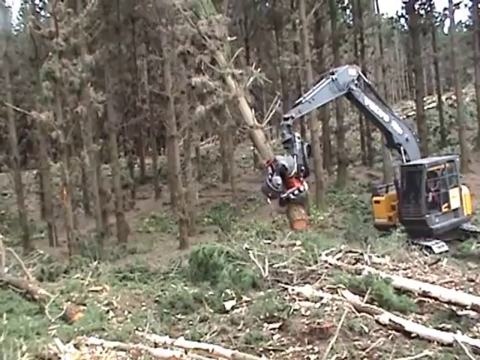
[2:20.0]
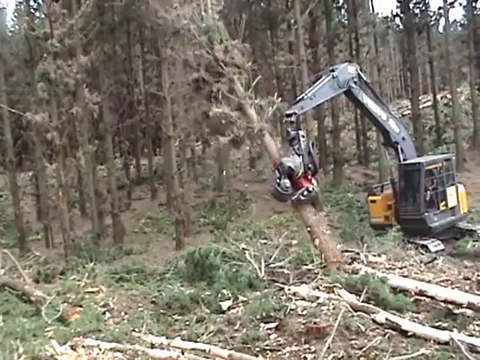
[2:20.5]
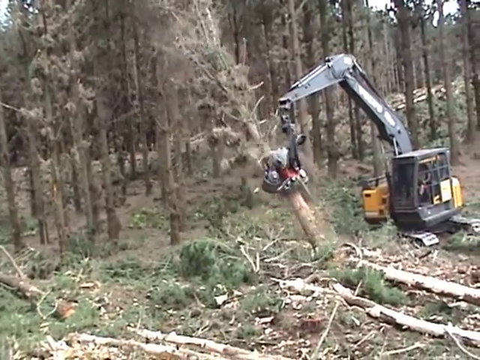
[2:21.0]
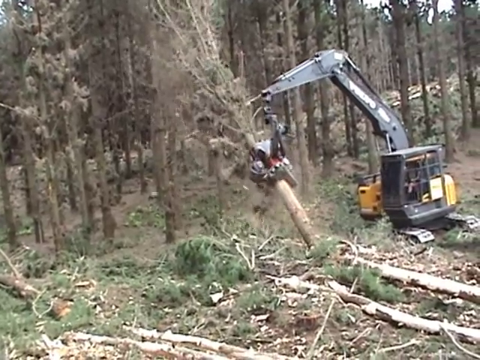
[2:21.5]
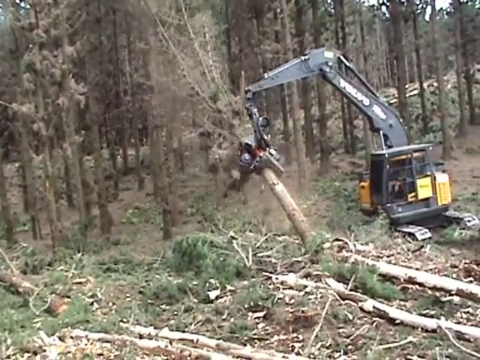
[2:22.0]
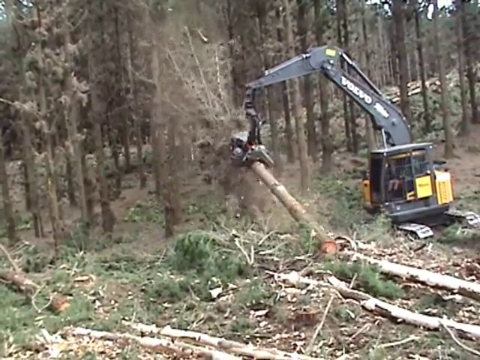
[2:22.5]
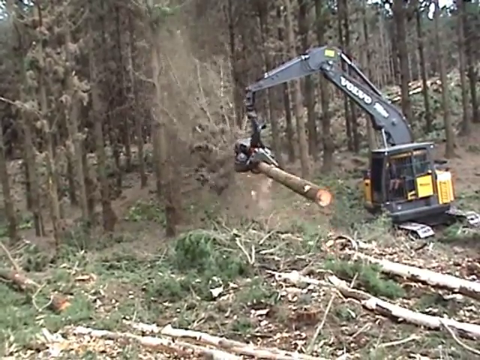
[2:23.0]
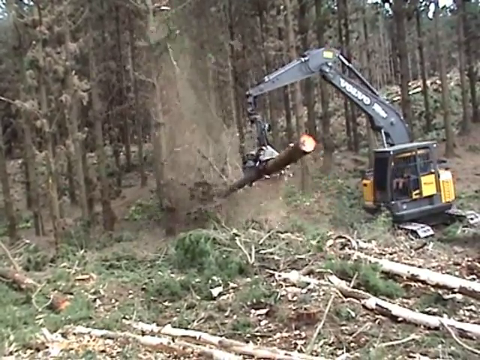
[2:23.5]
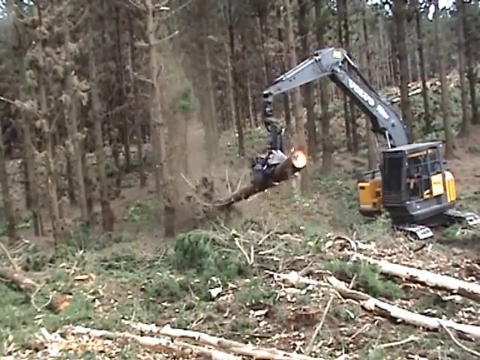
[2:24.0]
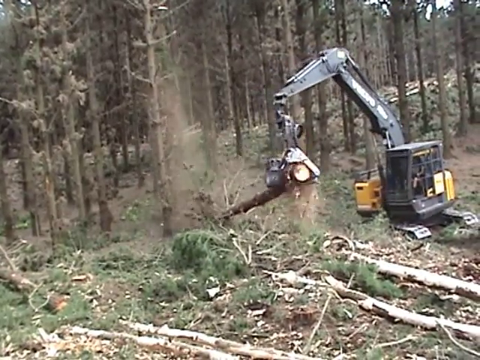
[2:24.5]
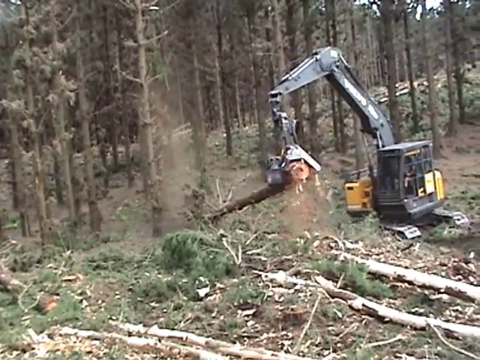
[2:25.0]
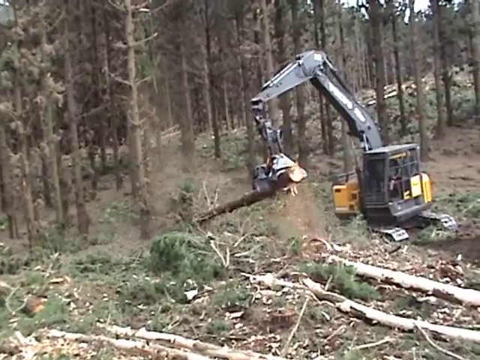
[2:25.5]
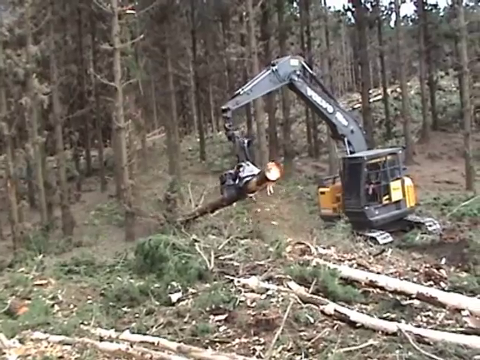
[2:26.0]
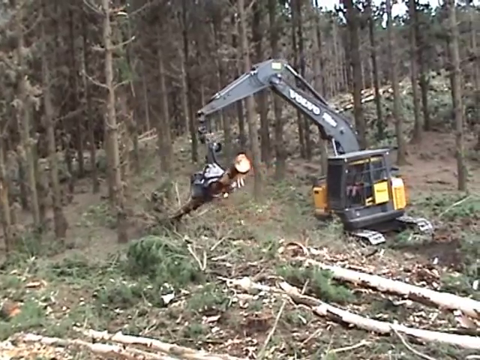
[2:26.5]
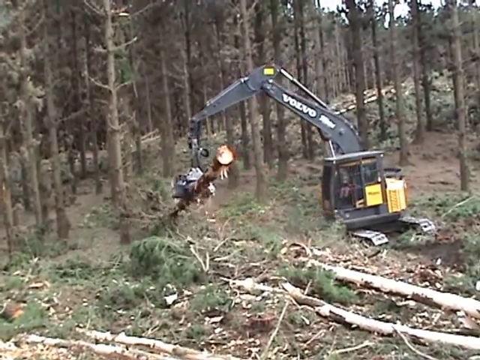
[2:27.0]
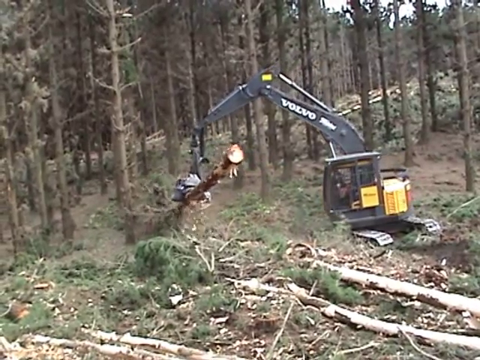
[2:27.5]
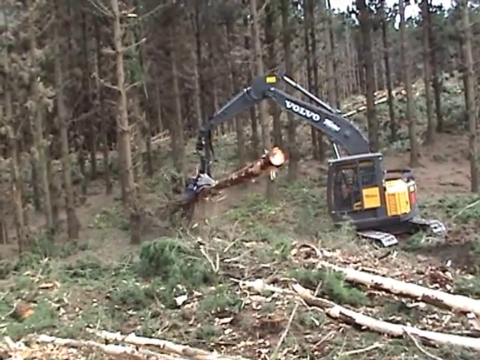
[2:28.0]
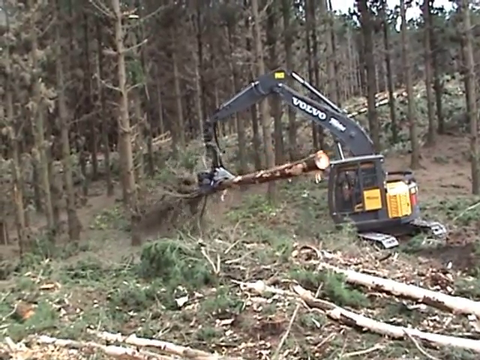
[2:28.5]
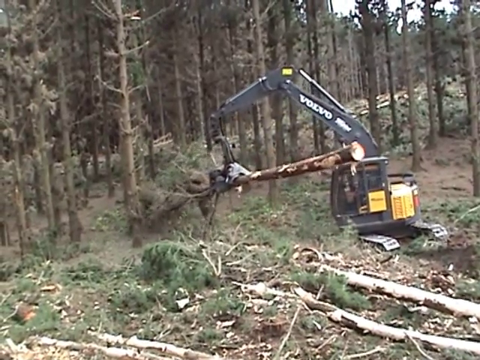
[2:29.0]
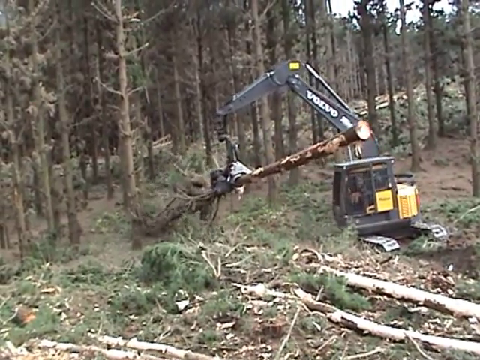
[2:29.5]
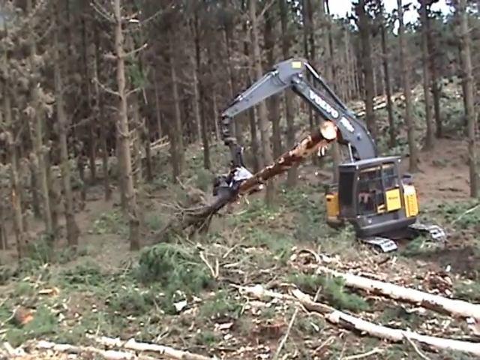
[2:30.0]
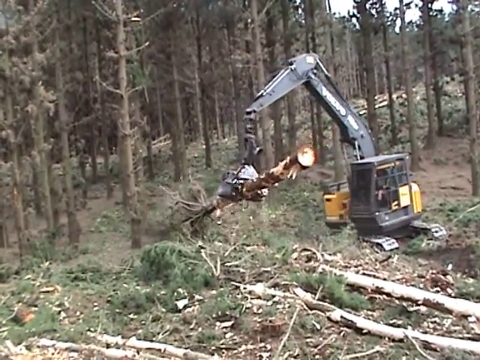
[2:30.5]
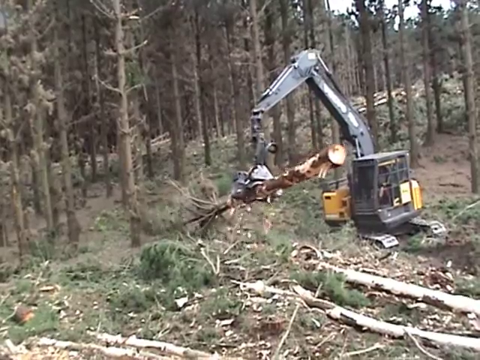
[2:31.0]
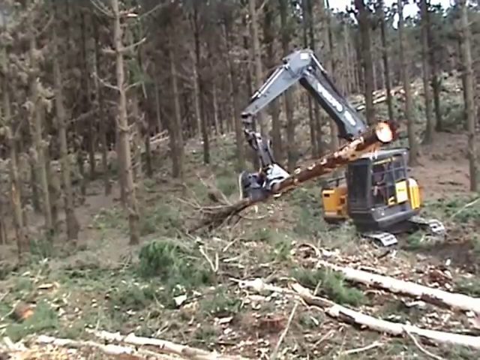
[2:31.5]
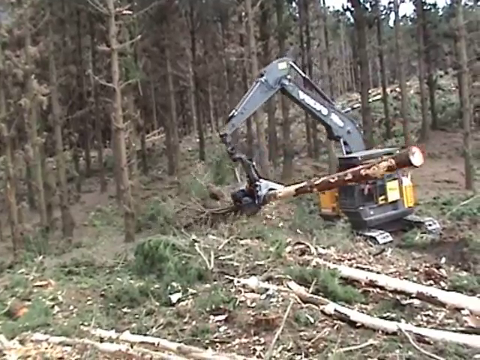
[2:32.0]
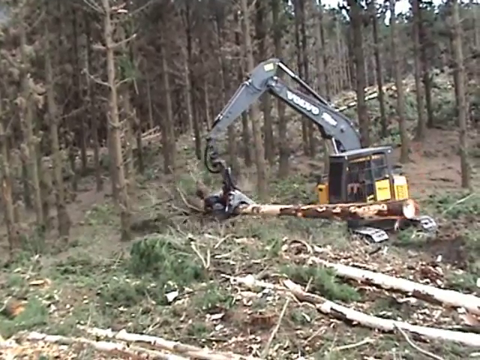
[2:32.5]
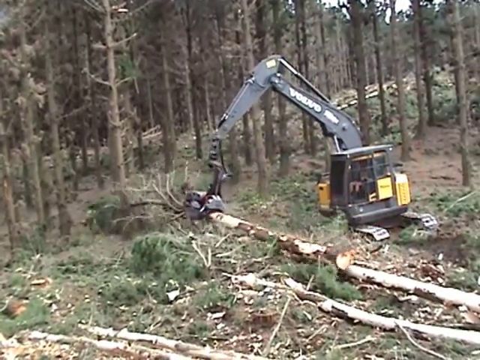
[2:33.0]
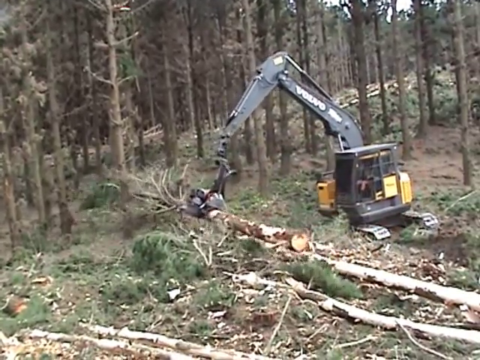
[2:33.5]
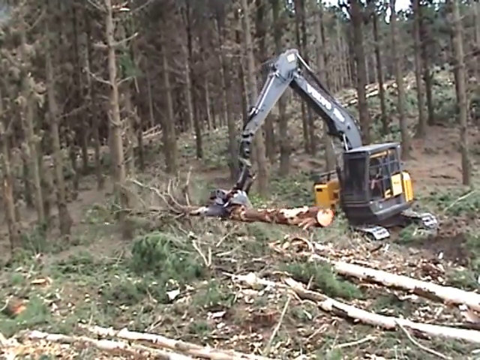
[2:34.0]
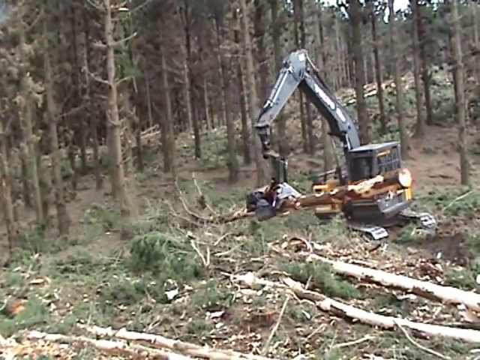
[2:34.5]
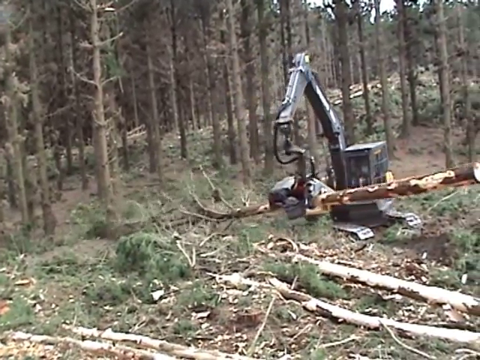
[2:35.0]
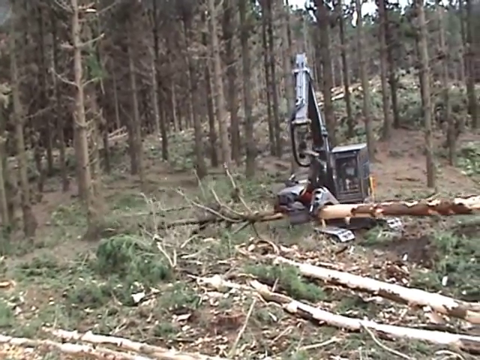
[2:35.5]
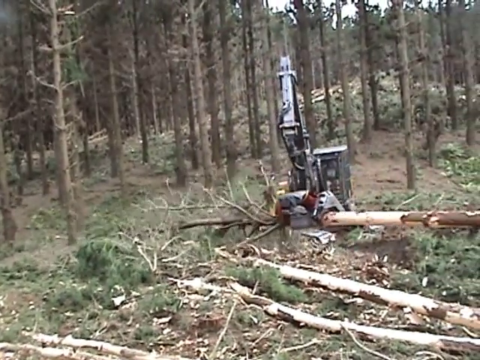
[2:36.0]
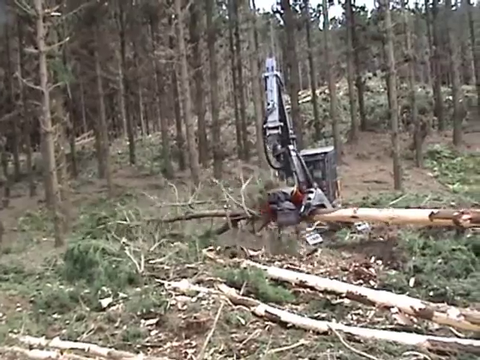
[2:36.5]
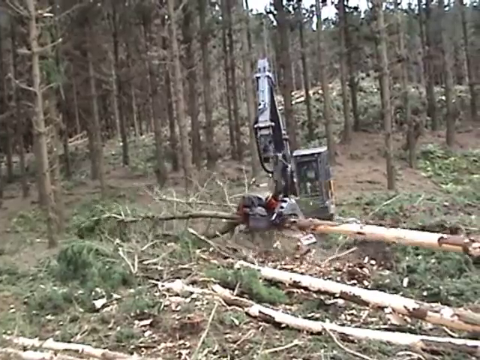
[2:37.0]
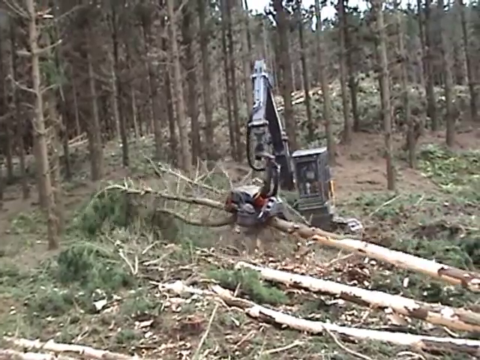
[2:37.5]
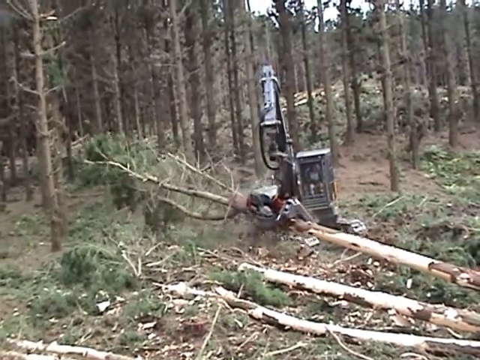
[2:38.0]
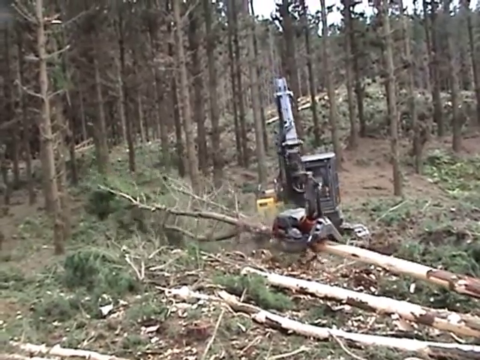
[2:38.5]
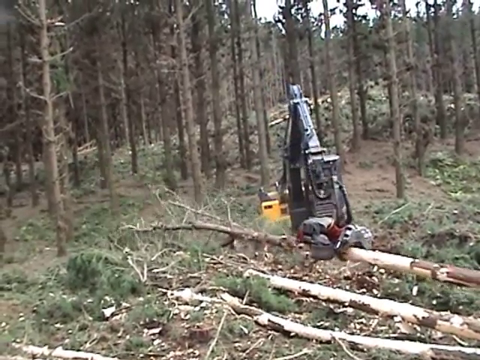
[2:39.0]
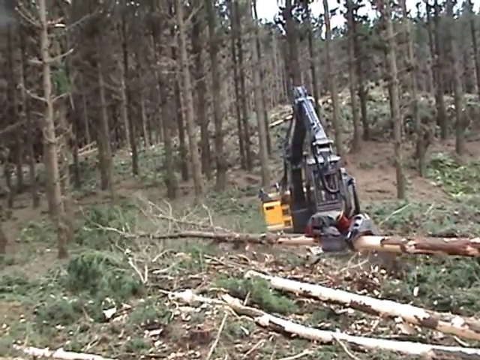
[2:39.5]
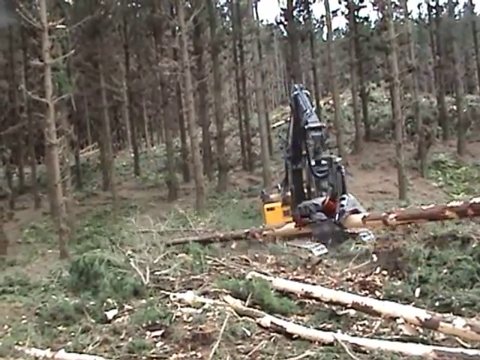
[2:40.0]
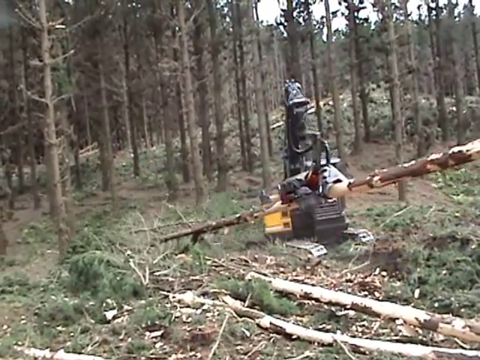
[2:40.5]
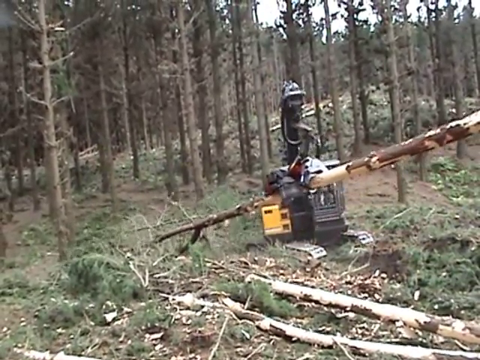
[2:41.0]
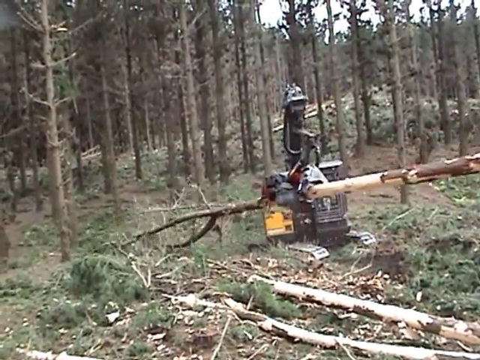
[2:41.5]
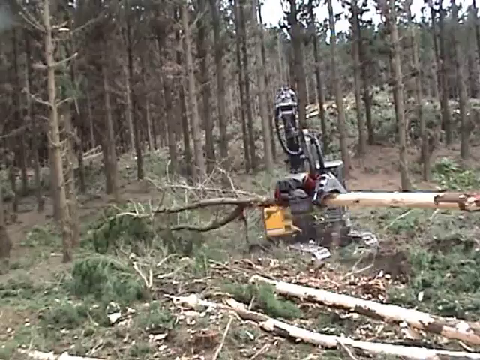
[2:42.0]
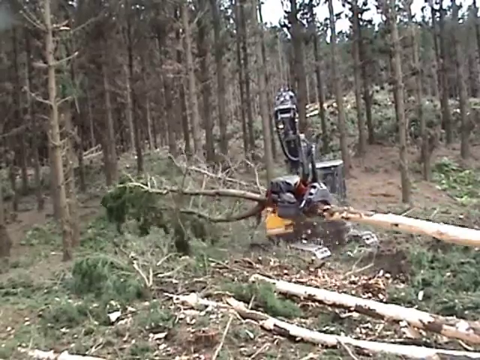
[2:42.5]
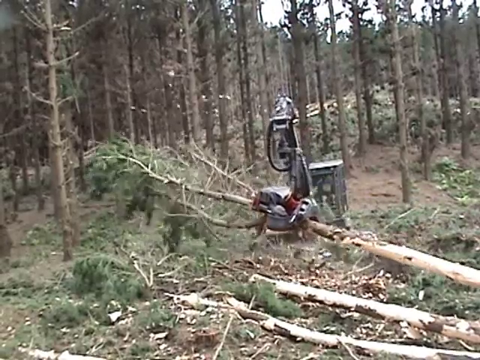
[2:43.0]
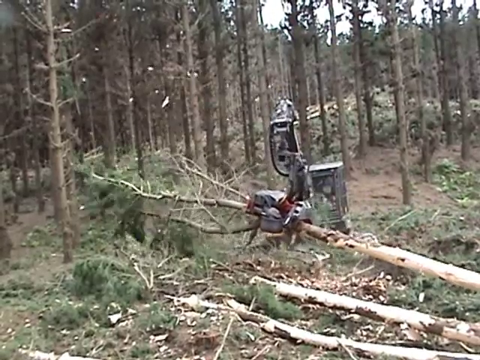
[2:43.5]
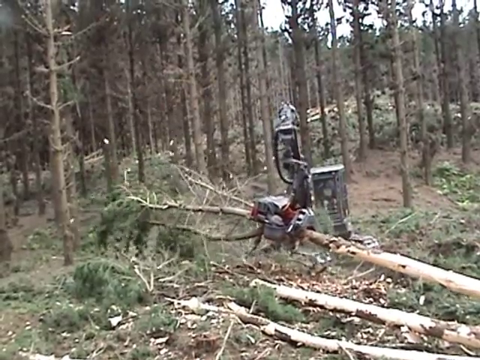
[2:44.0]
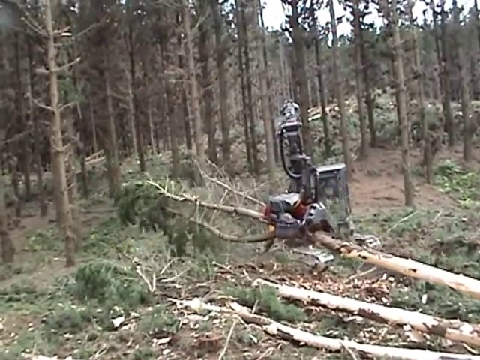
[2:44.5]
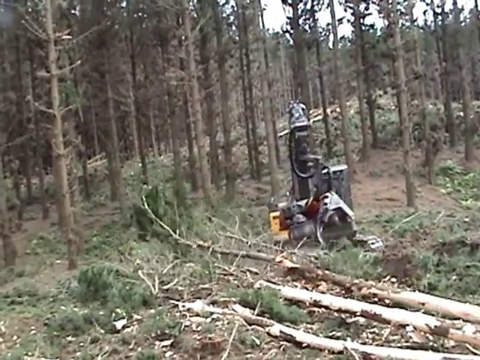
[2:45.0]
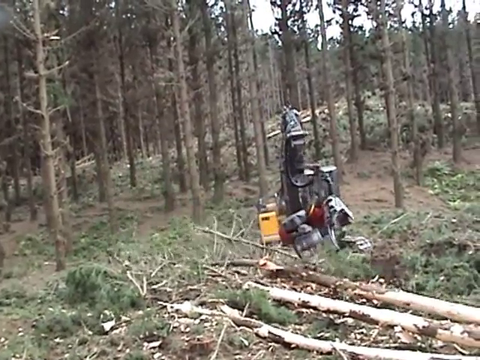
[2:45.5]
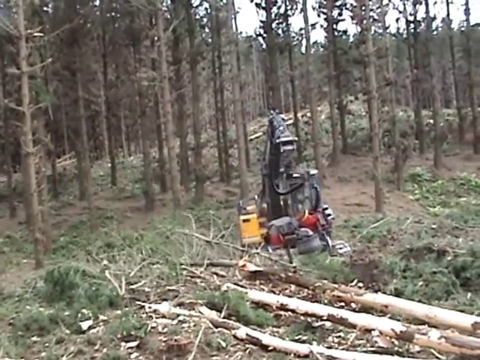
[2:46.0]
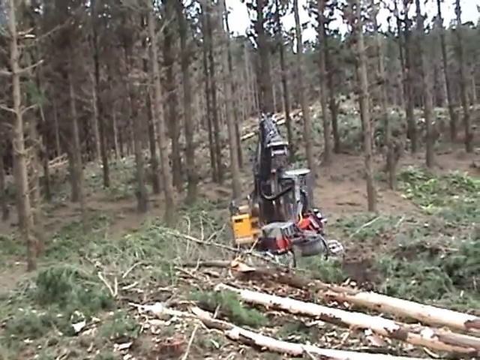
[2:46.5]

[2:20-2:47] The third tree slides through the attachment's grip as it moves up and down, cleaning it off. It stops toward the tip of the tree, and it strips away quite a lot of the bark on this one, leaving mostly the white interior. Unlike with the other two trees, it does not sever the top. The top of this tree is kind of divergent, almost splitting into two separate trunks of similar thickness, so the attachment perhaps cannot get past that point or the trunk may be too thick to sever there. It drops the tree fully without separating the trunk from the tip. A huge cloud of dust and debris, possibly moss or dust, falls away from the tree as it is first grabbed, and the attachment slides to the top of the tree with such force that splinters of wood and debris fly away from it.